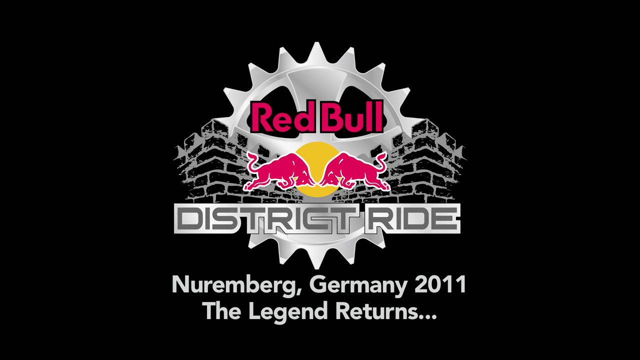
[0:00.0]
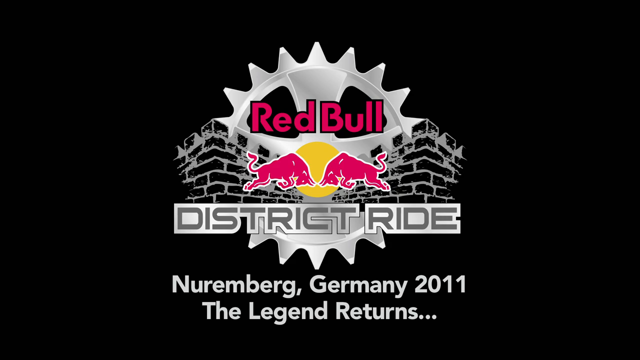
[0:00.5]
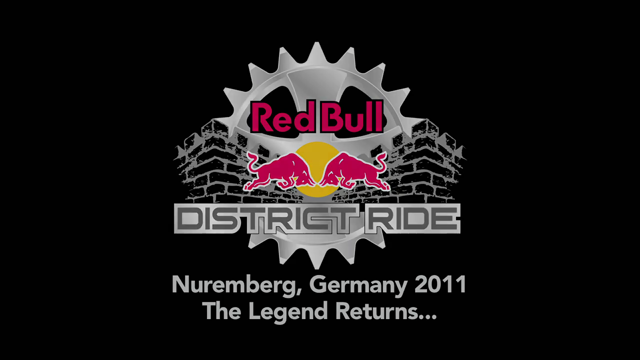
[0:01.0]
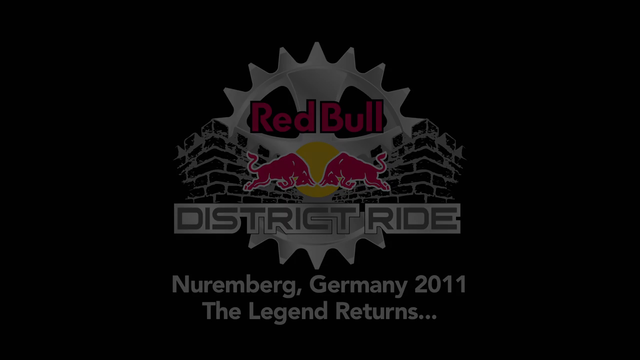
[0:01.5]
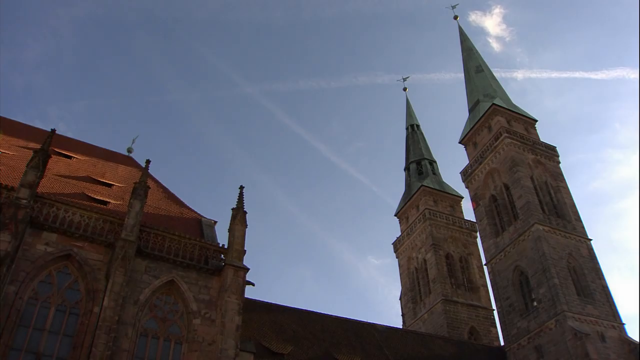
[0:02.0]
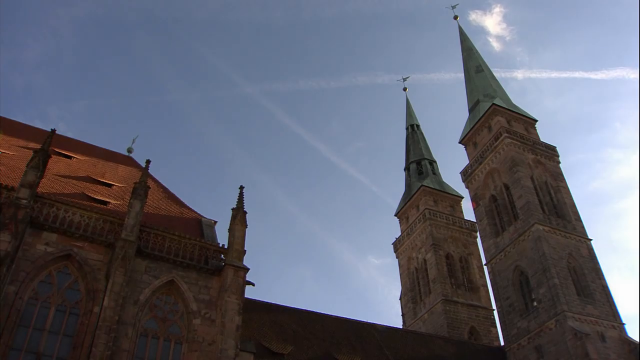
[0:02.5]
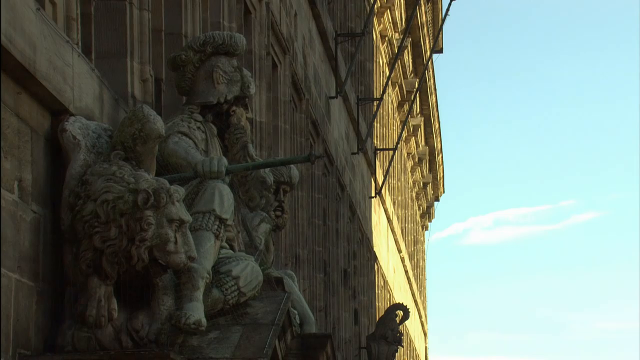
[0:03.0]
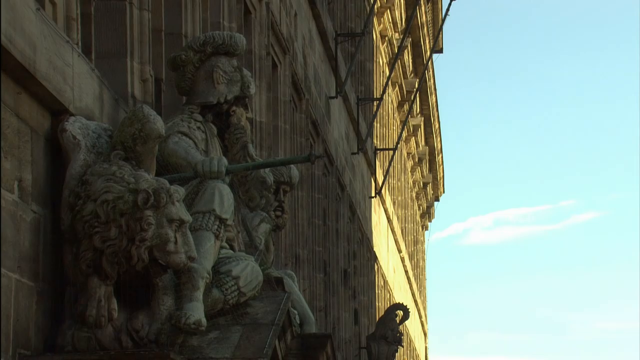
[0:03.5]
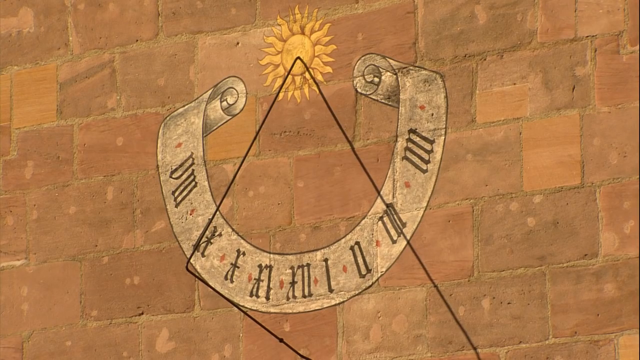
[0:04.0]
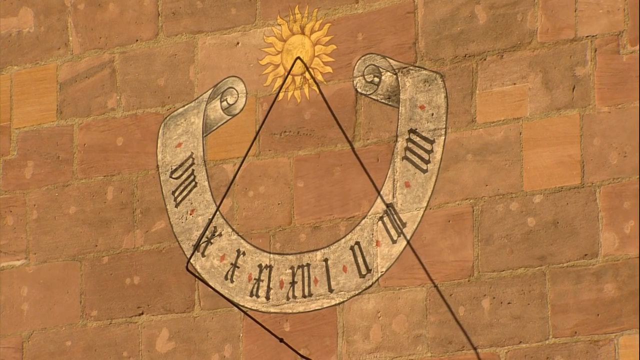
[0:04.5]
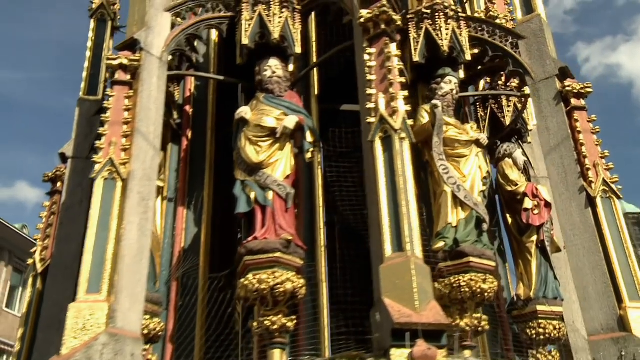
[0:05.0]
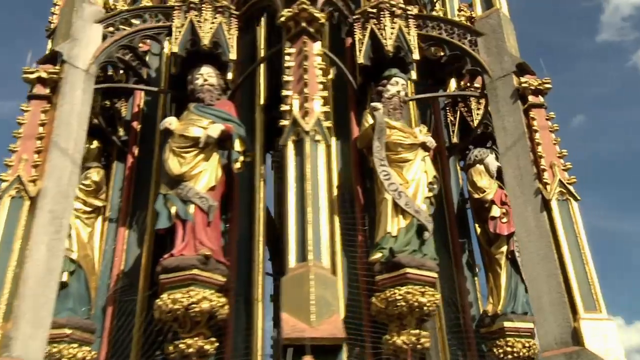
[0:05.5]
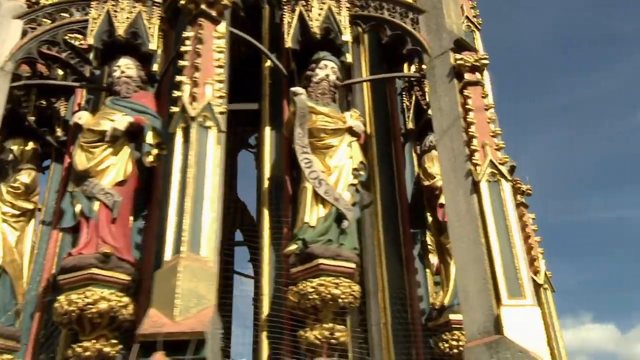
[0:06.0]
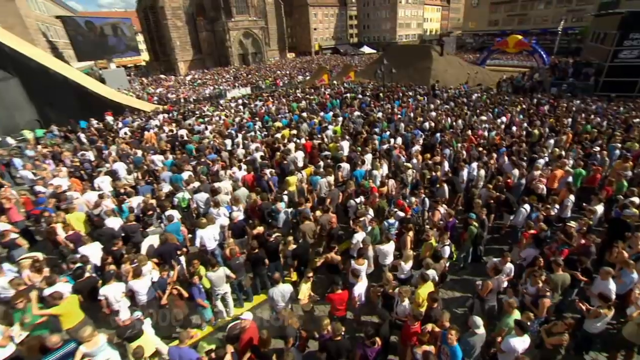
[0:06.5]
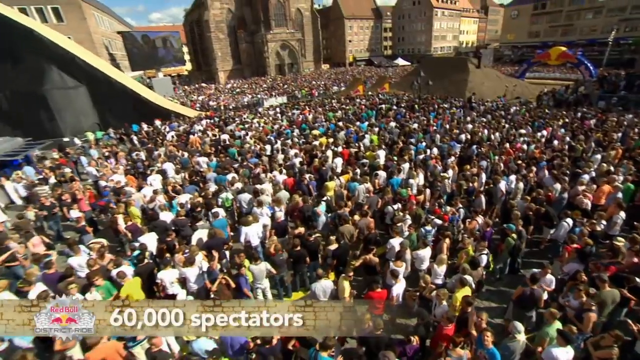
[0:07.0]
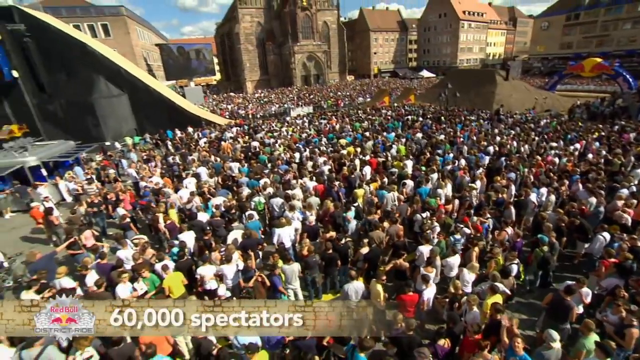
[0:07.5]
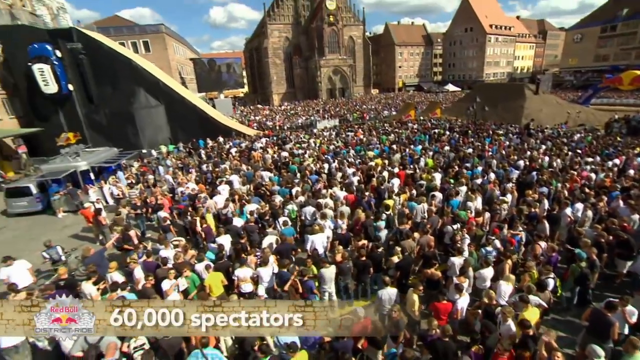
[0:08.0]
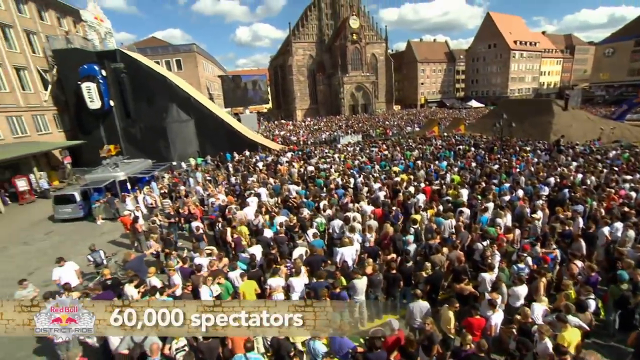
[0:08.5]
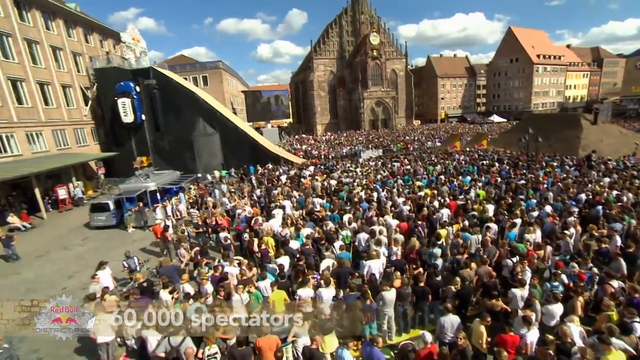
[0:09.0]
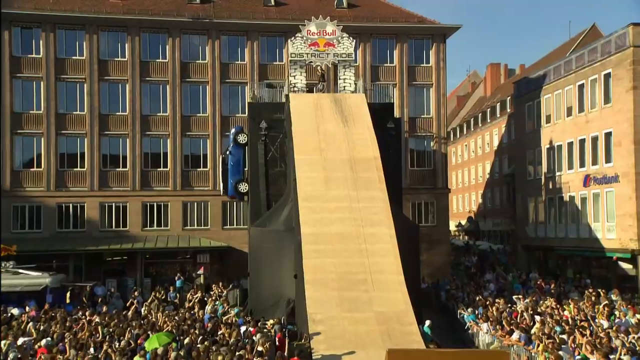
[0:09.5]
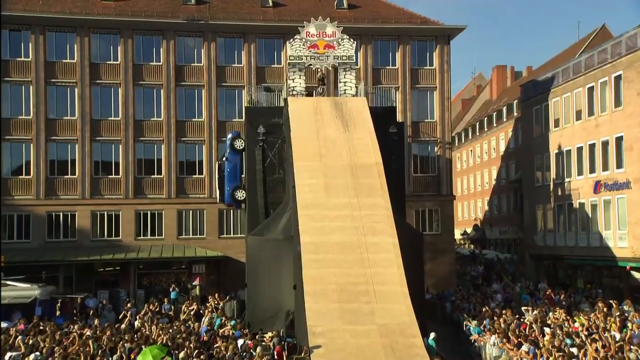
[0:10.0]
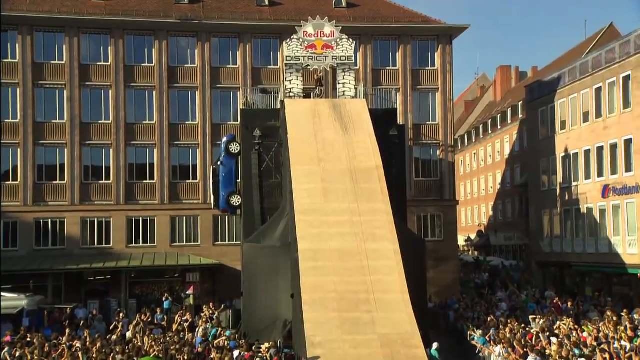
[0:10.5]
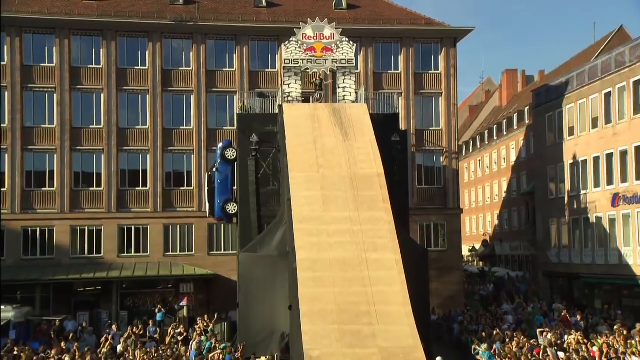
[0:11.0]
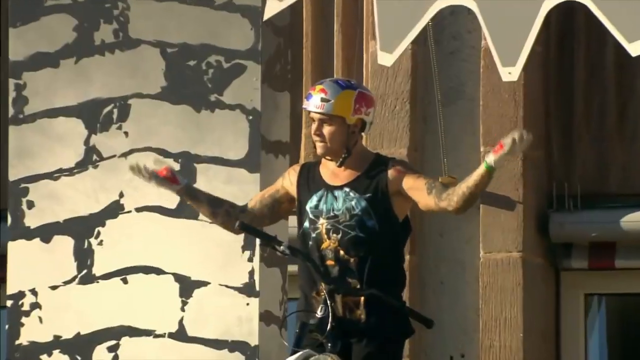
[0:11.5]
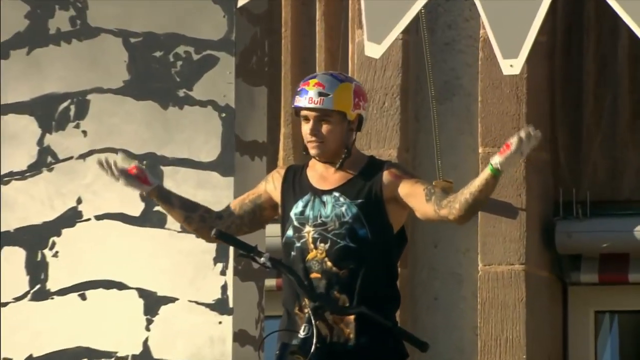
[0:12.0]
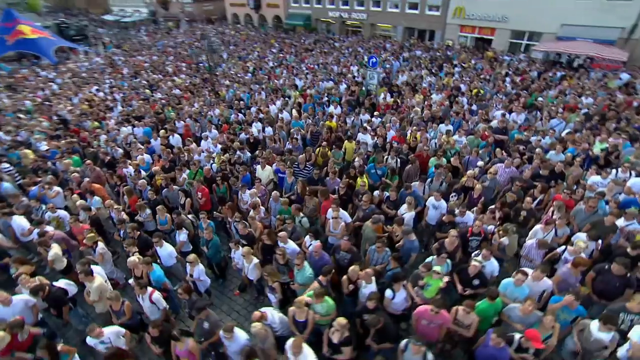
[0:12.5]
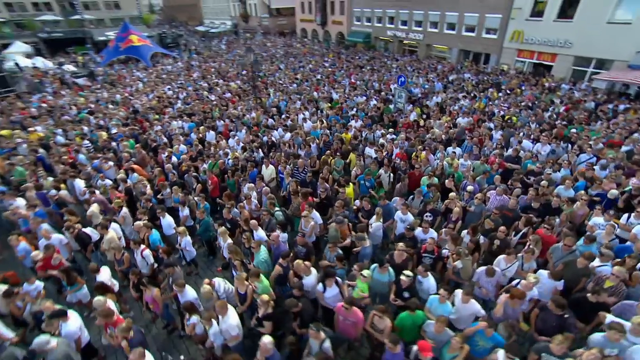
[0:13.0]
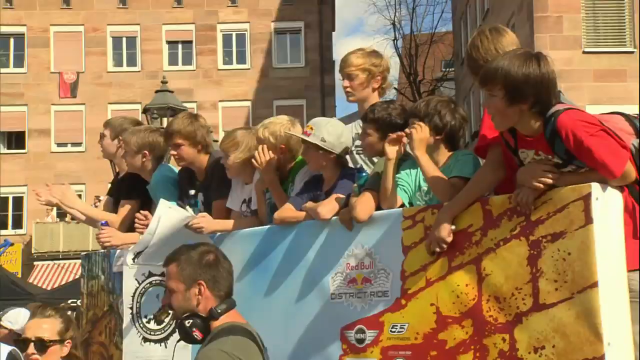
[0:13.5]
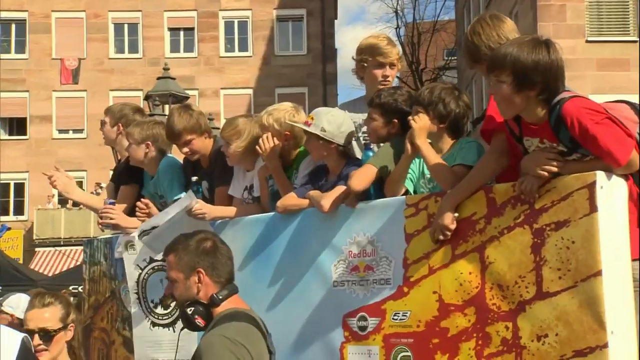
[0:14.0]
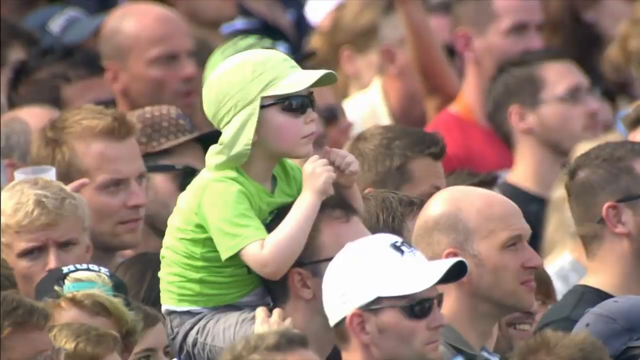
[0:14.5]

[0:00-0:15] The video shows large crowds and indicates that there are 60,000 spectators, gathered to watch a Red Bull event taking place in a large city. A beige ramp runs all the way down, and at the top of it a man is standing and sitting. He wears a helmet and puts his arms out to the side, revving up the crowd; he is probably about to ride down the ramp on his bike, probably to do a stunt. It is a sunny day. There are no leaves on the tree, suggesting possibly the end of winter or fall, and people are not wearing coats. A car is stood up vertically on the side of the ramp as decoration.